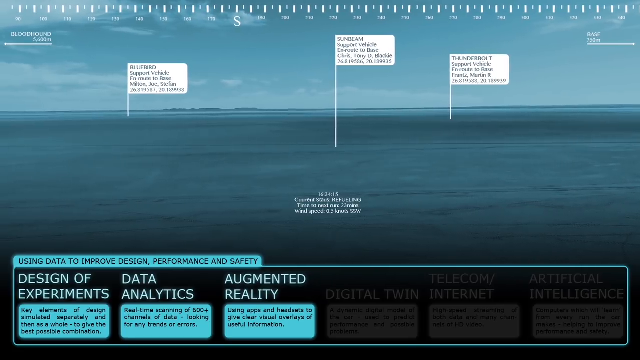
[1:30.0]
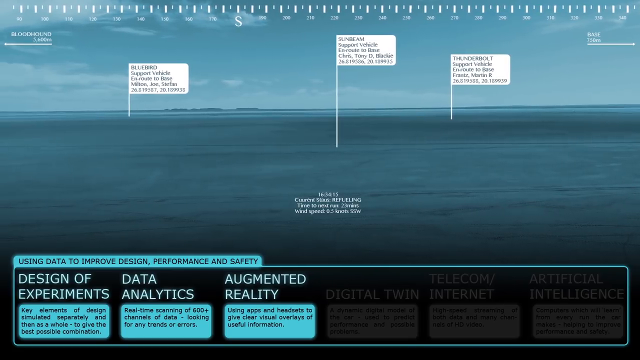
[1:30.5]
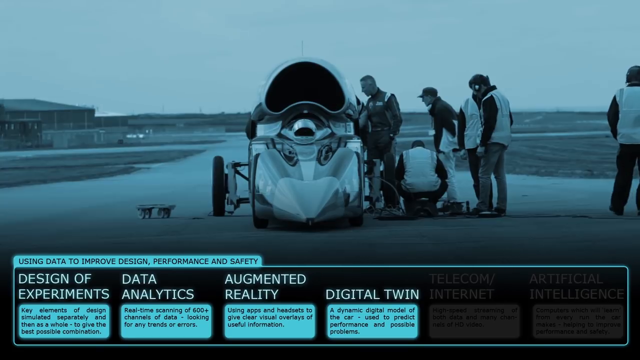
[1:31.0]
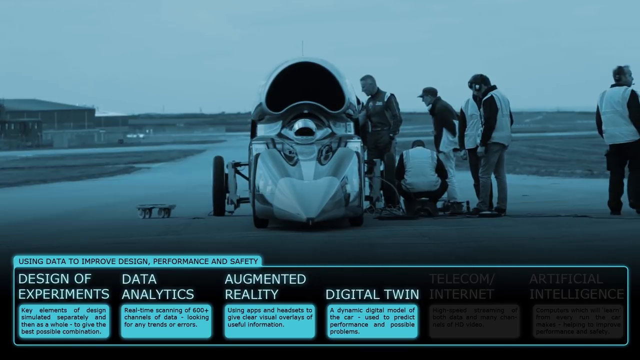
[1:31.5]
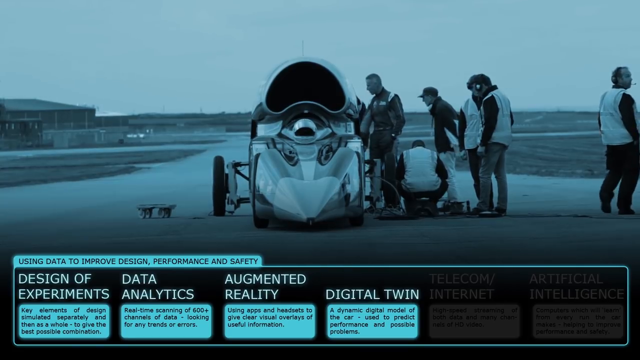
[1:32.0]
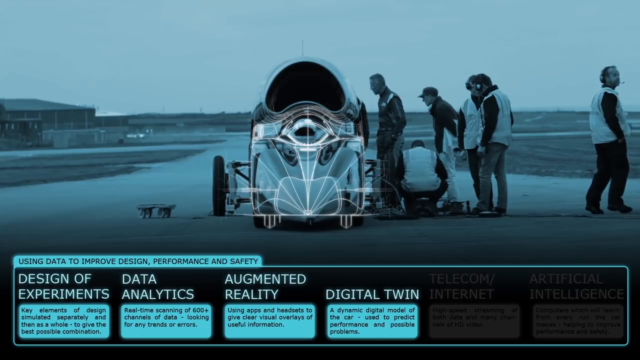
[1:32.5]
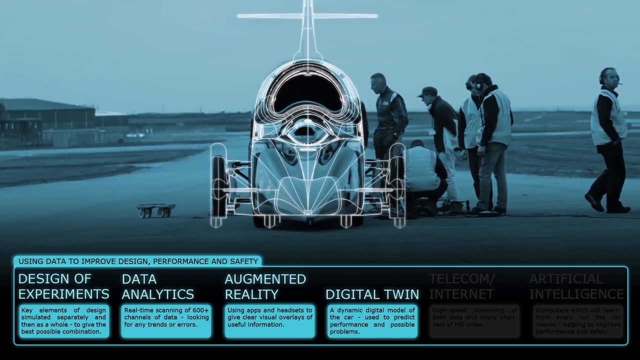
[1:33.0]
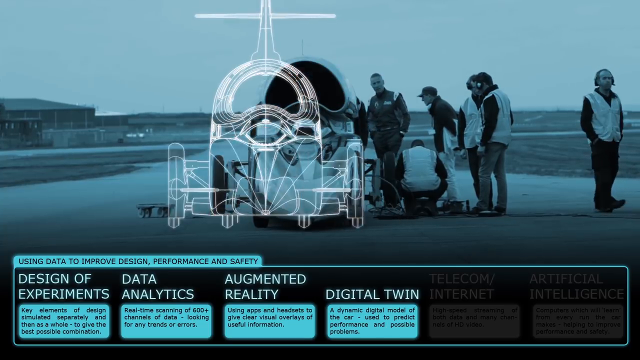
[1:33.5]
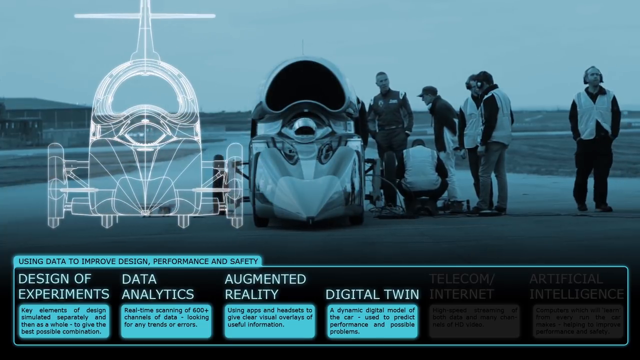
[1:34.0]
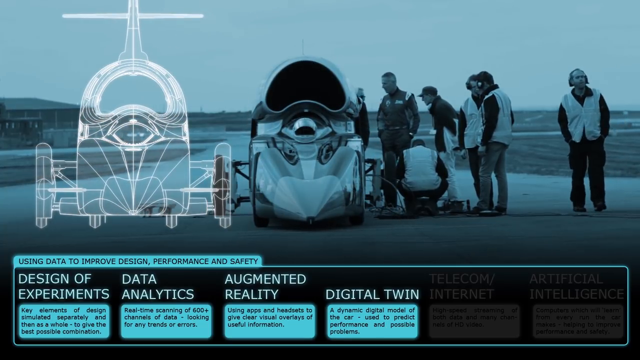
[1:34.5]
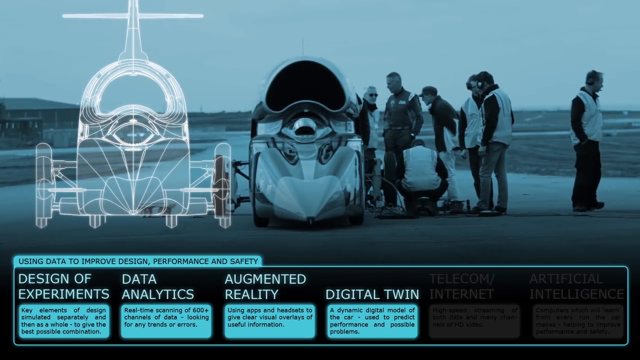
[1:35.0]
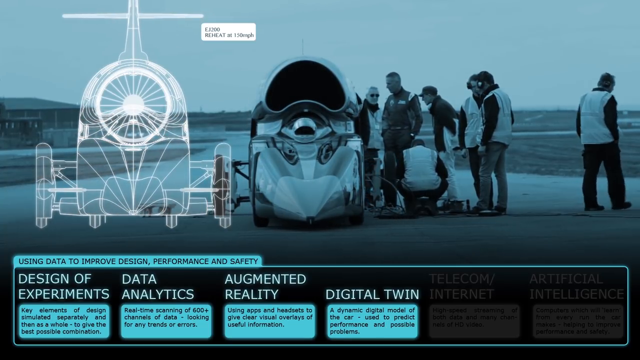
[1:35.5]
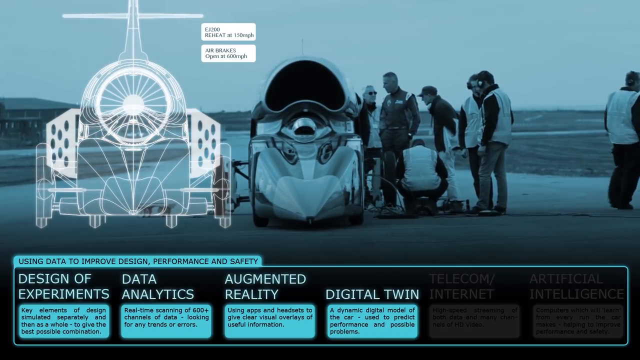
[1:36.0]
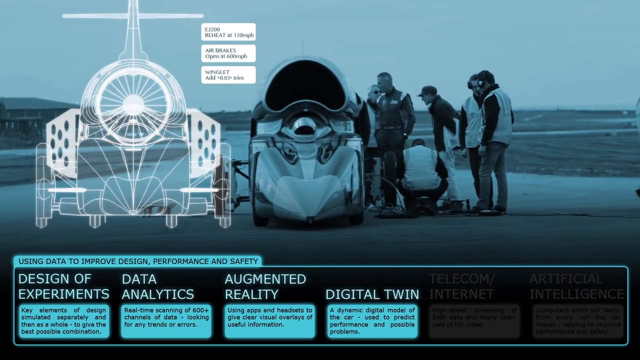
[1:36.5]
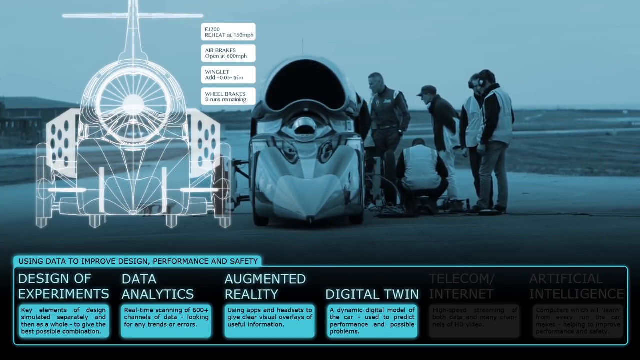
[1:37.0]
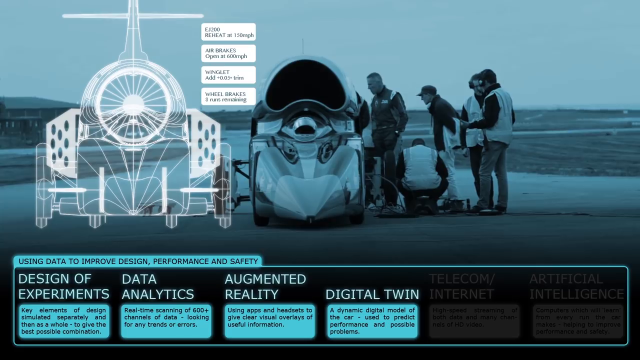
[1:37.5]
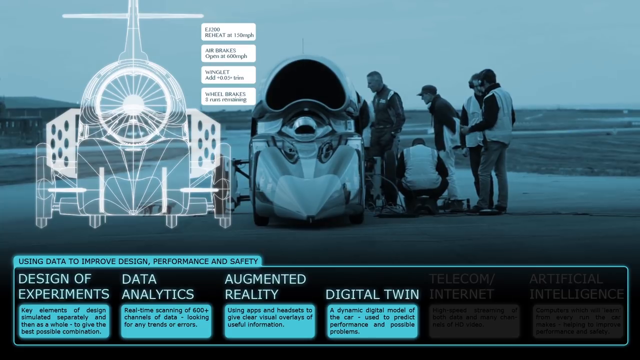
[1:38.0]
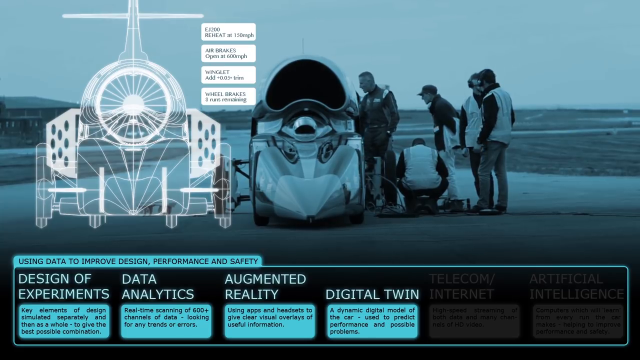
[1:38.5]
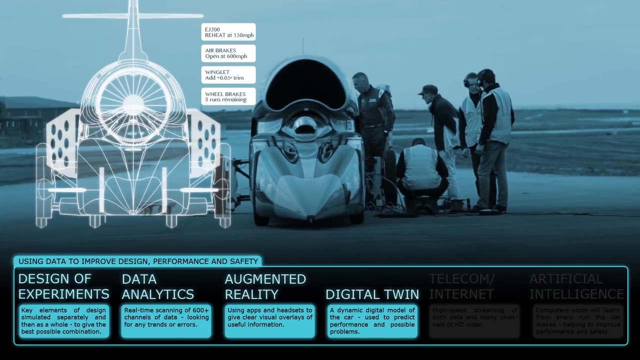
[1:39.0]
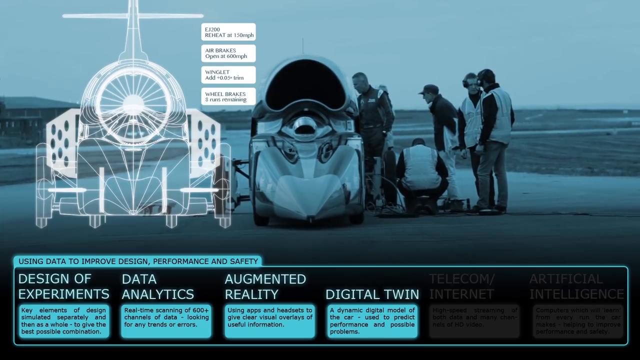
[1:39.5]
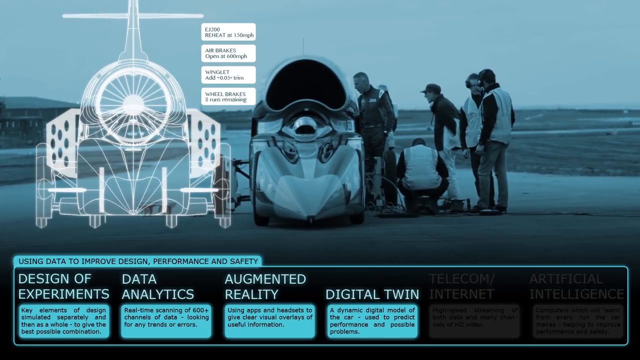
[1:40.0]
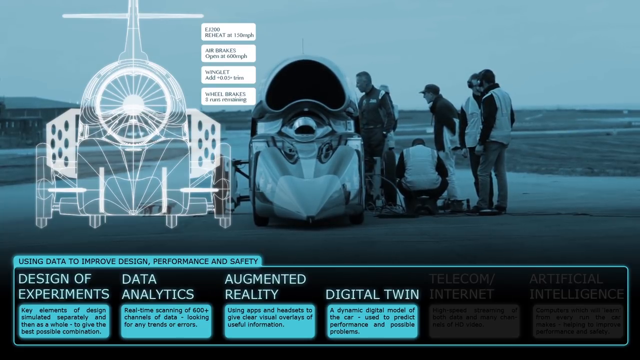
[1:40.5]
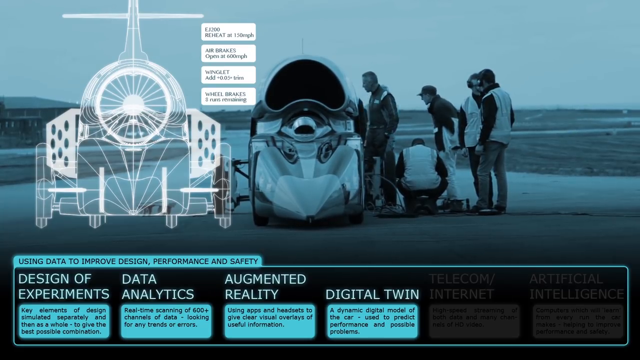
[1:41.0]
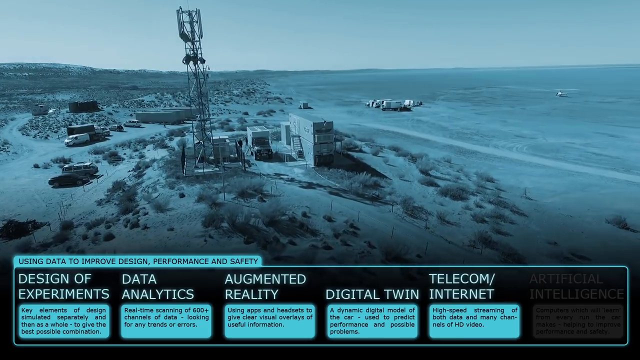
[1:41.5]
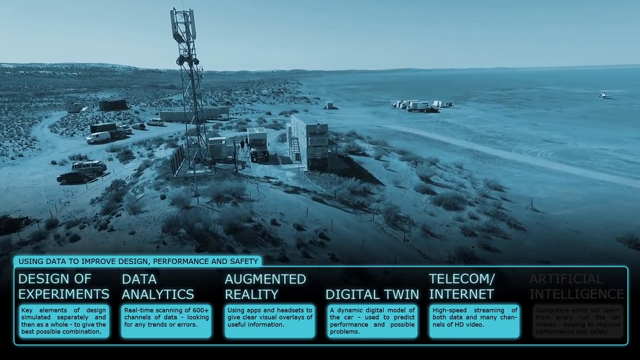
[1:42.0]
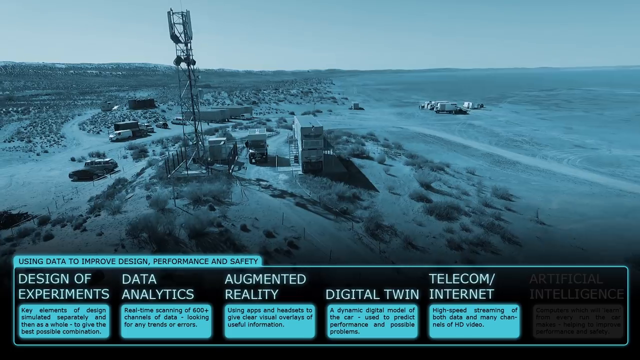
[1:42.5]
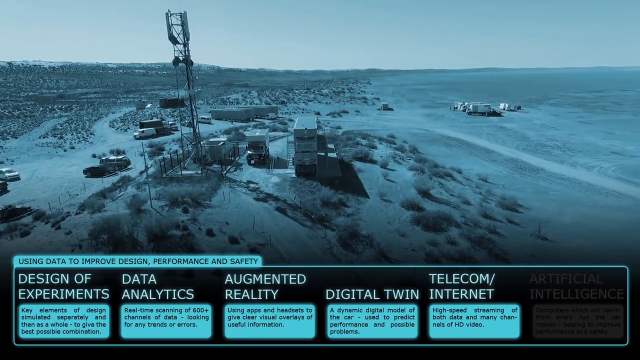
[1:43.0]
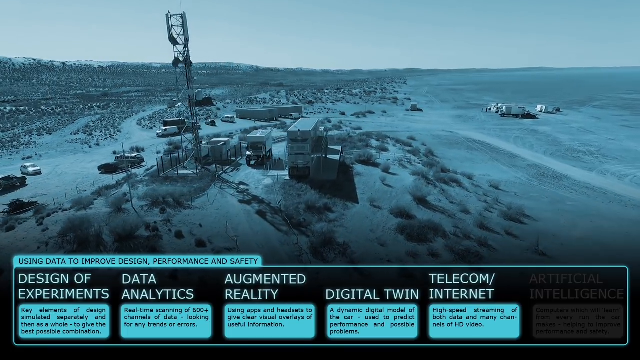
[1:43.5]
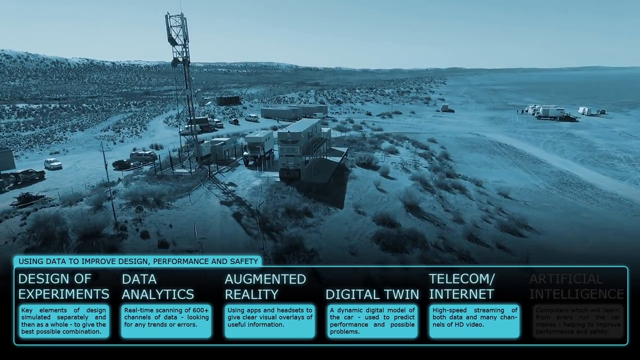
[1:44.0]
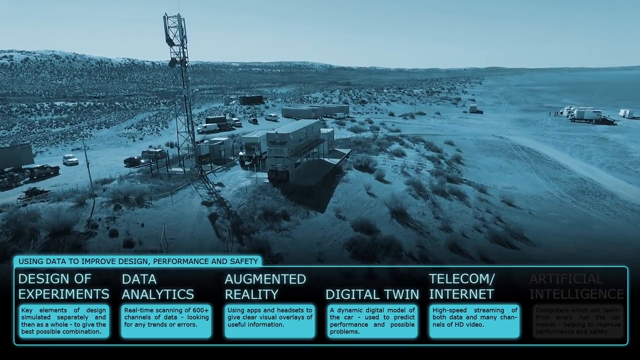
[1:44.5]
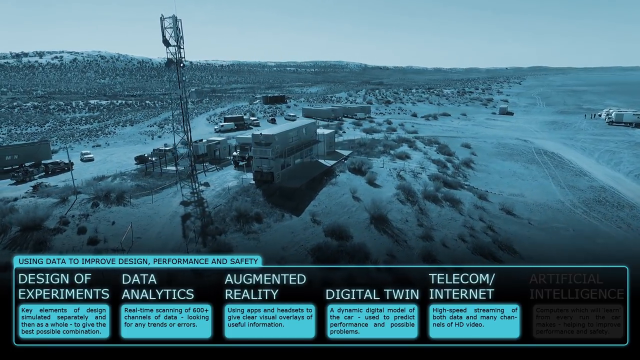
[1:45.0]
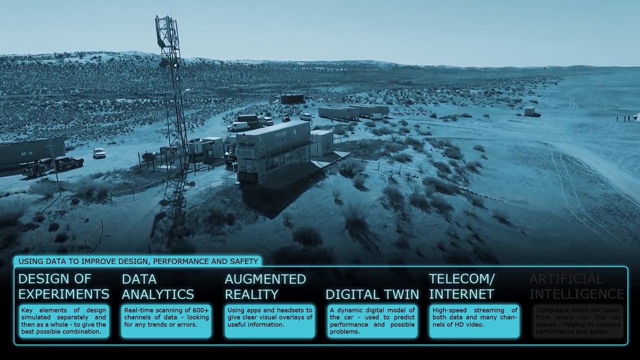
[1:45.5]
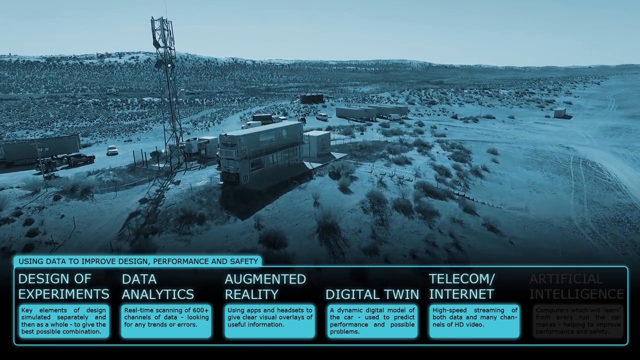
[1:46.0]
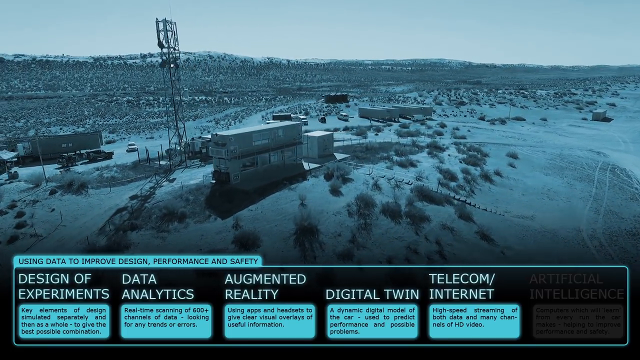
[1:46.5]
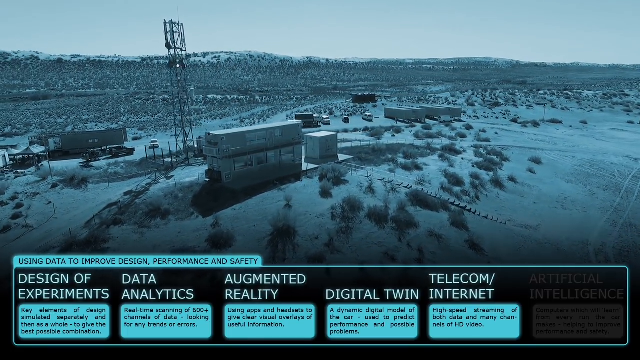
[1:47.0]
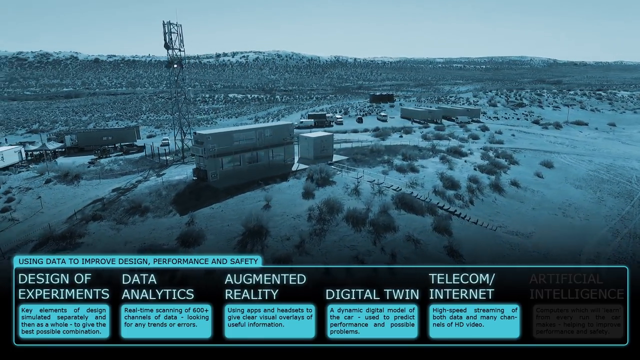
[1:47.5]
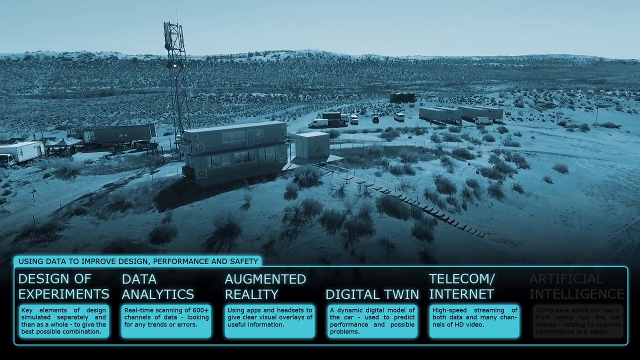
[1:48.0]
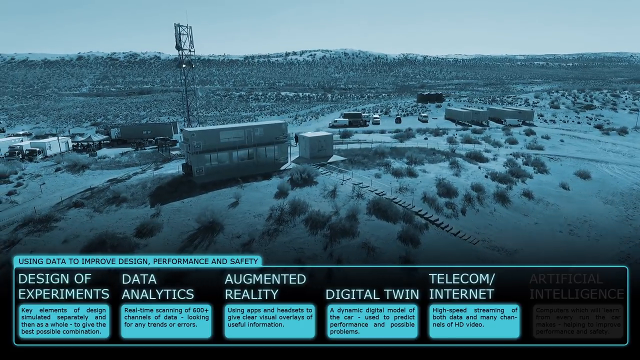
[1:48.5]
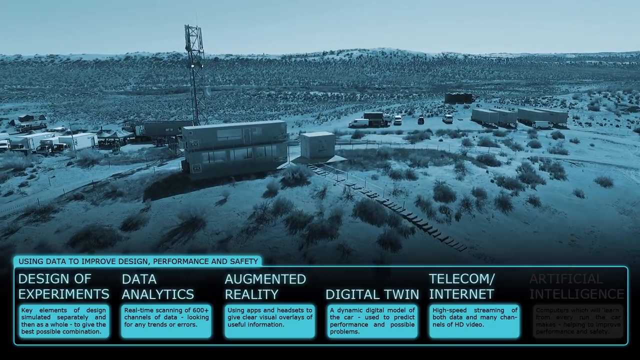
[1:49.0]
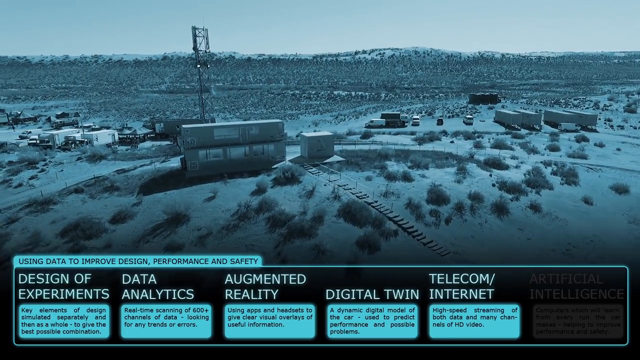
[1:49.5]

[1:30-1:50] What looks like an ocean appears with three white flags sticking out of it, each with text too small to read except the word at the top: one says "bluebird," one "sunbeam" and one "thunderbolt." At the very top of the screen are hash marks; one has a white "S" below it, and the others have numbers with some sort of measurement, perhaps a compass. Next, a rocket car stands stationary on a drag racing strip, its nose looking very silver. Six men are in the image. The one closest to the car on the left appears to be the driver, judging by how he is dressed; the others wear jackets that are white in the middle with dark sleeves. One is bent down on the ground looking over something while the others stand, several wearing headsets, and they walk around. A sort of hand-drawn blueprint of the rocket car is superimposed to the side next to it, and white boxes appear about the car's brakes. At the bottom is "using data to improve design performance and safety," with six headings, each with a paragraph below. The view pans out to what is perhaps the whole facility around the strip, showing a couple of trailers where people are probably working and several parked cars in a very desolate desert area, with desert vegetation in the background.